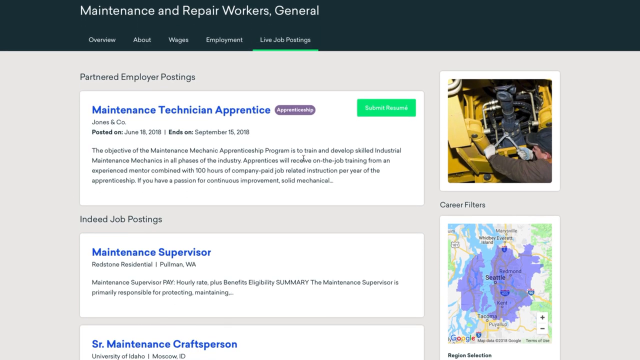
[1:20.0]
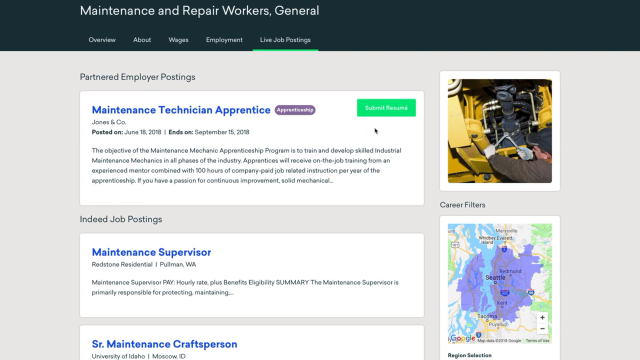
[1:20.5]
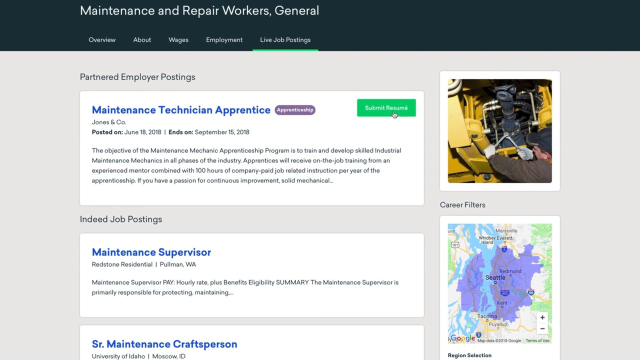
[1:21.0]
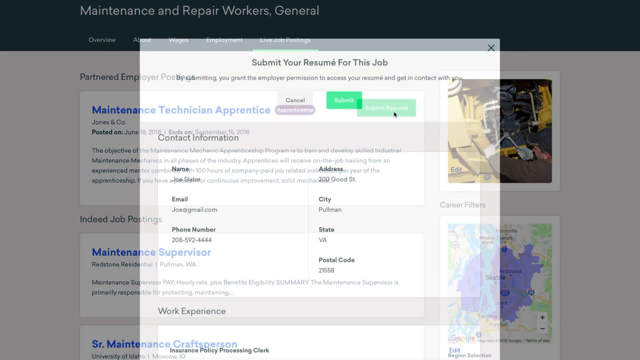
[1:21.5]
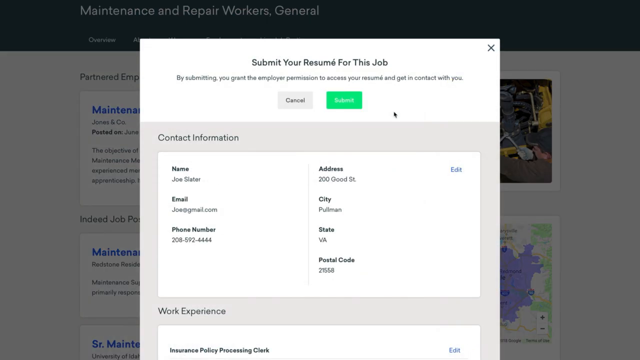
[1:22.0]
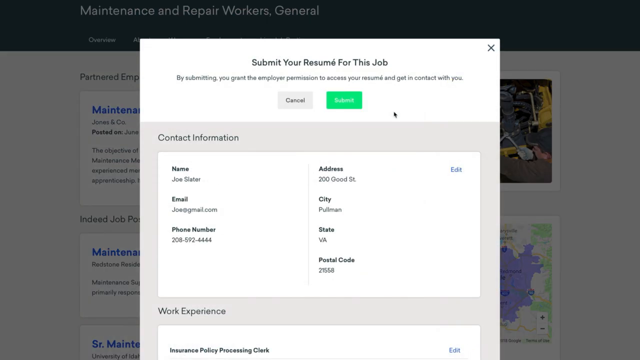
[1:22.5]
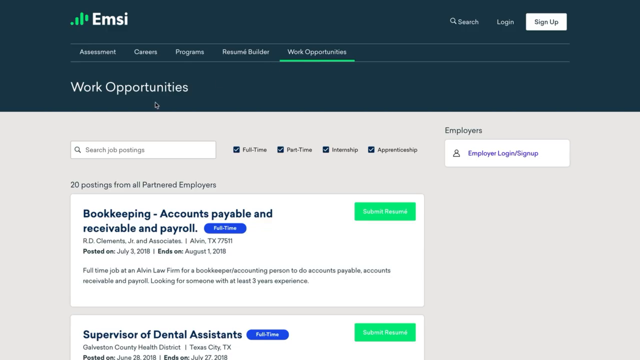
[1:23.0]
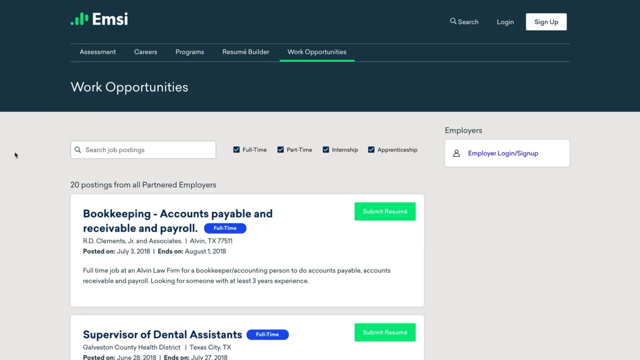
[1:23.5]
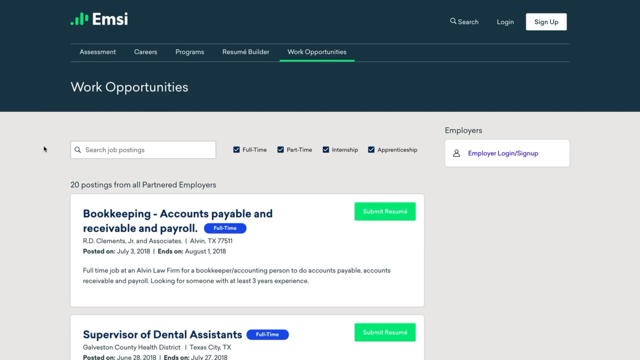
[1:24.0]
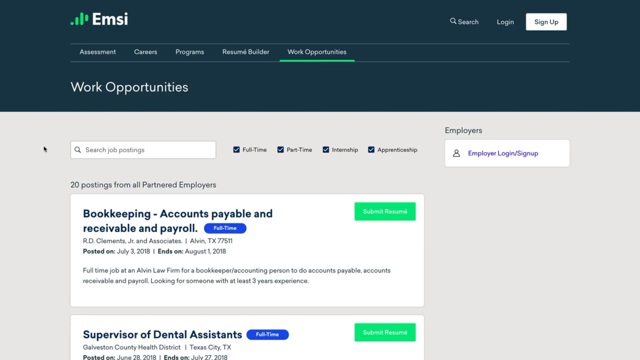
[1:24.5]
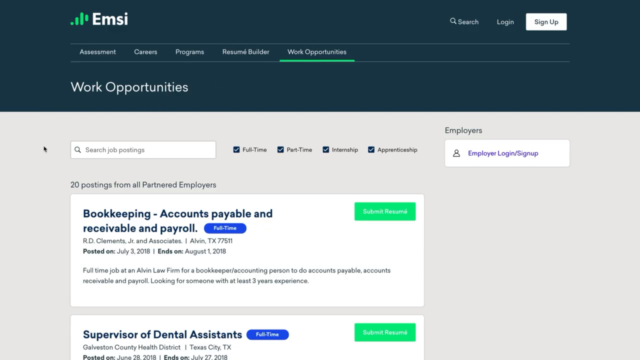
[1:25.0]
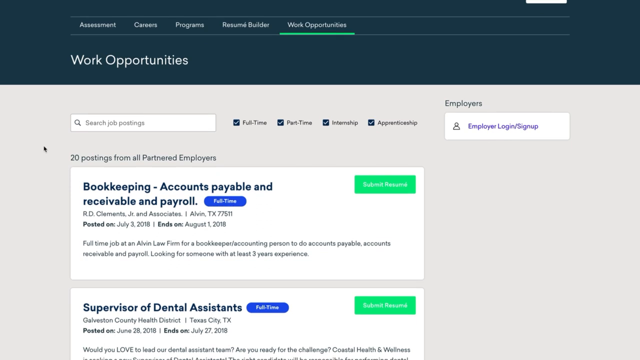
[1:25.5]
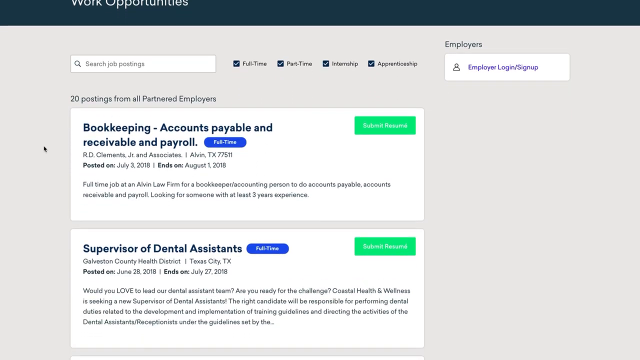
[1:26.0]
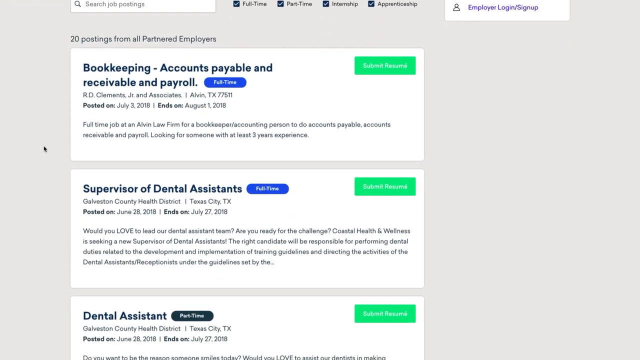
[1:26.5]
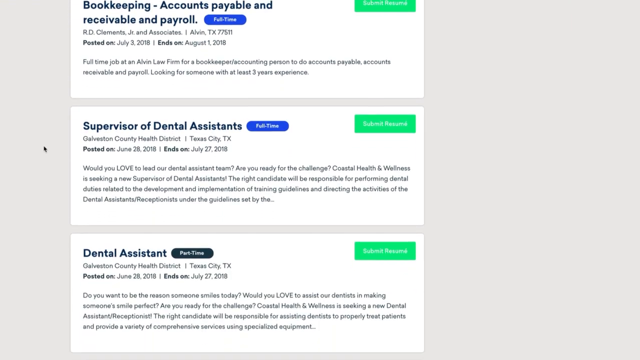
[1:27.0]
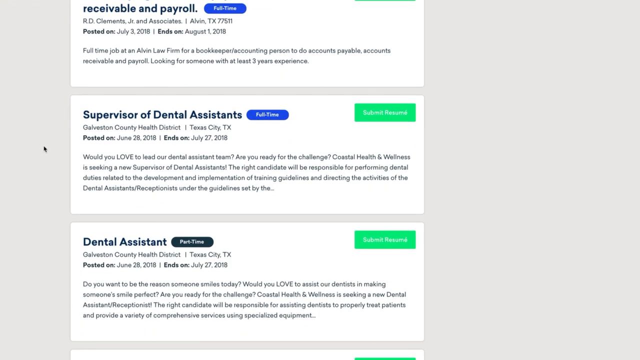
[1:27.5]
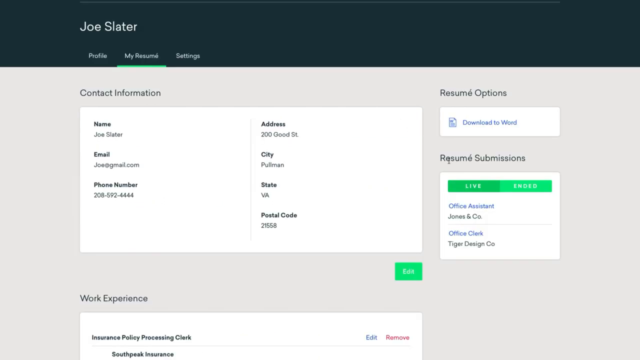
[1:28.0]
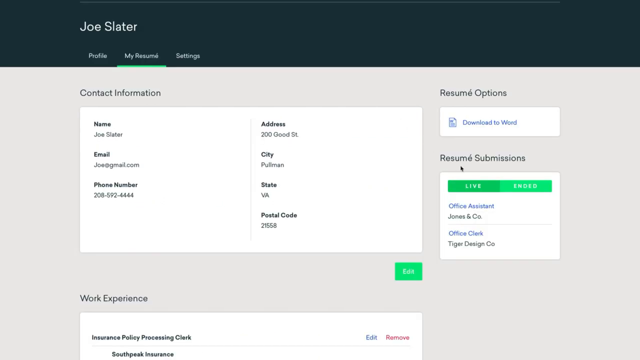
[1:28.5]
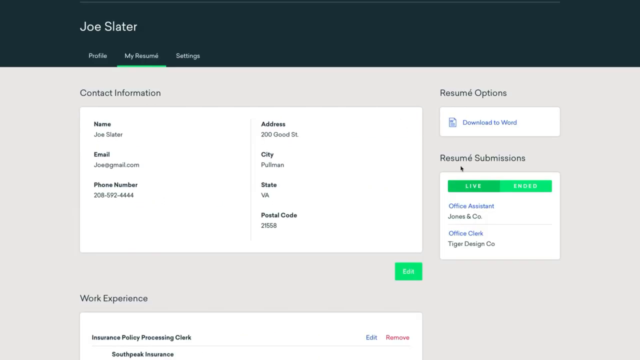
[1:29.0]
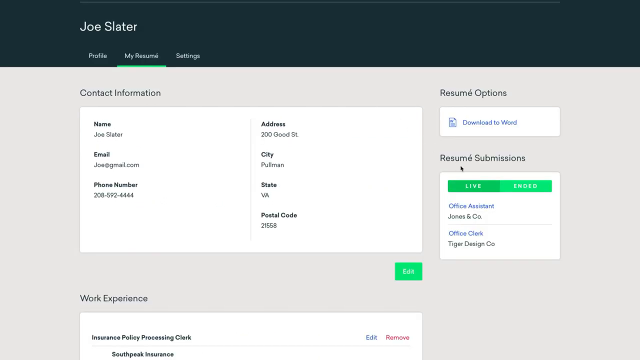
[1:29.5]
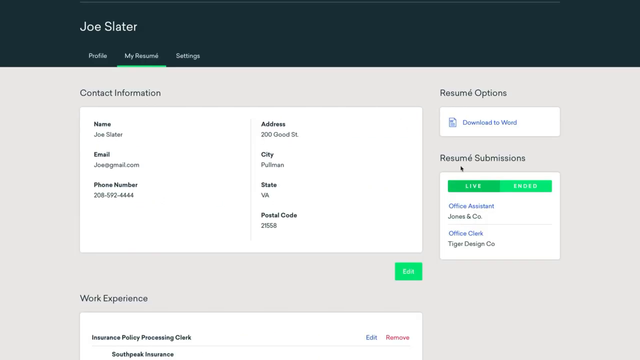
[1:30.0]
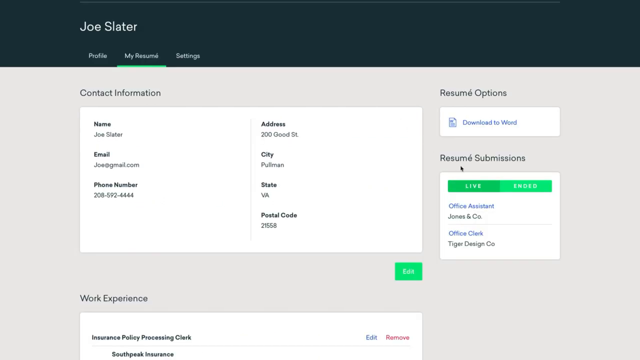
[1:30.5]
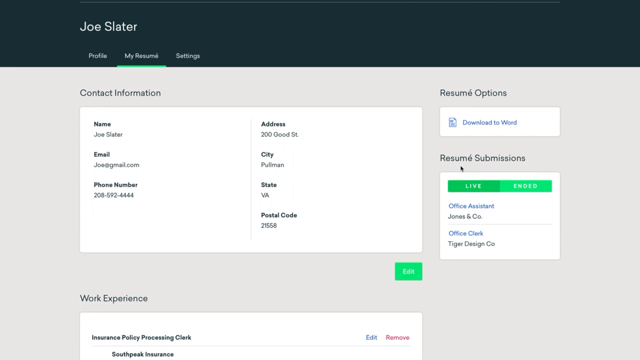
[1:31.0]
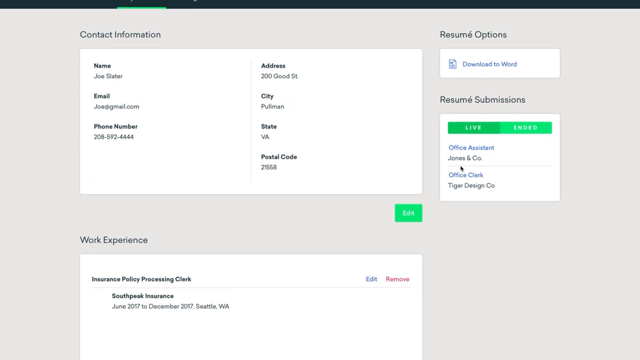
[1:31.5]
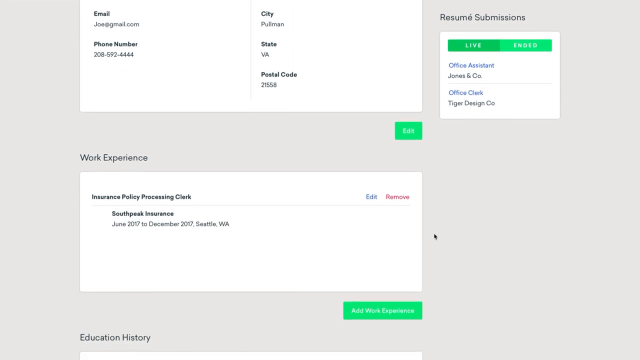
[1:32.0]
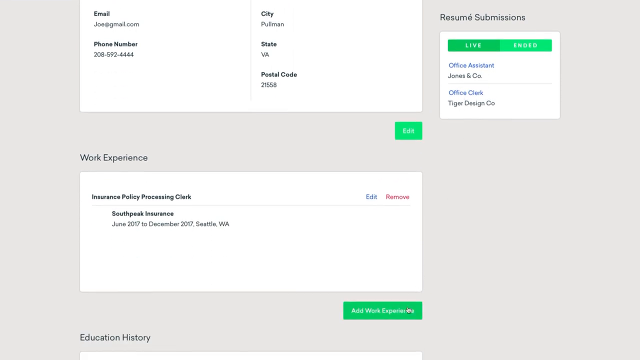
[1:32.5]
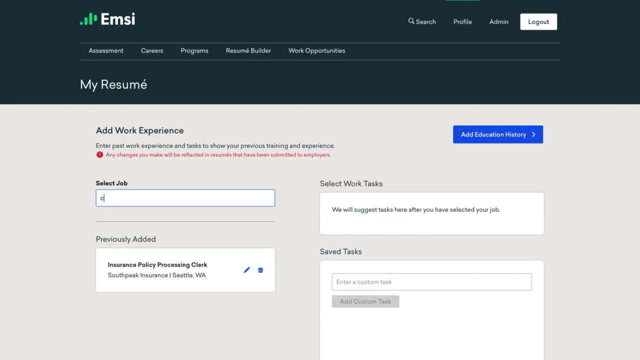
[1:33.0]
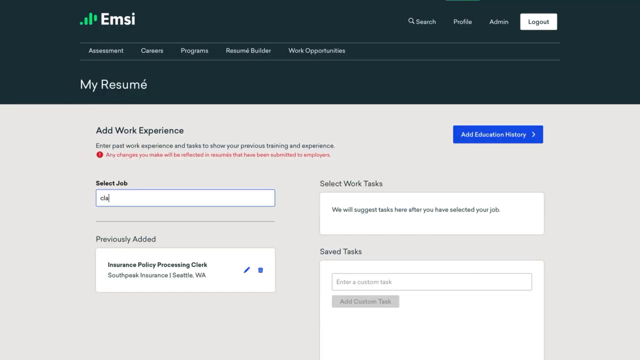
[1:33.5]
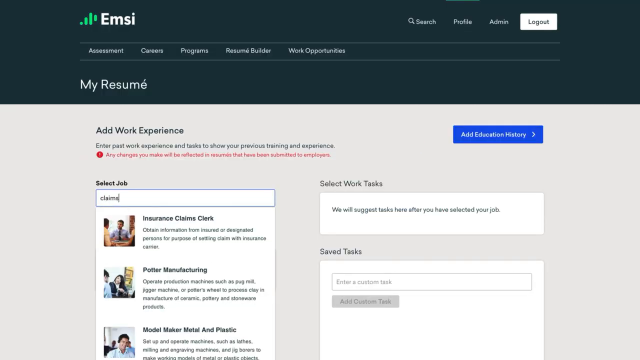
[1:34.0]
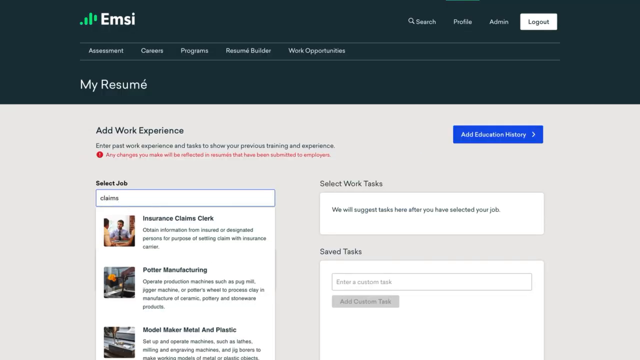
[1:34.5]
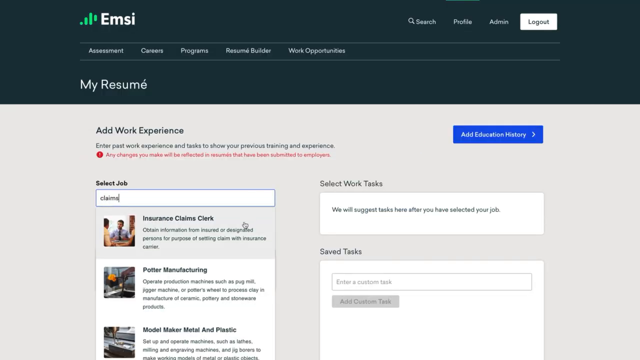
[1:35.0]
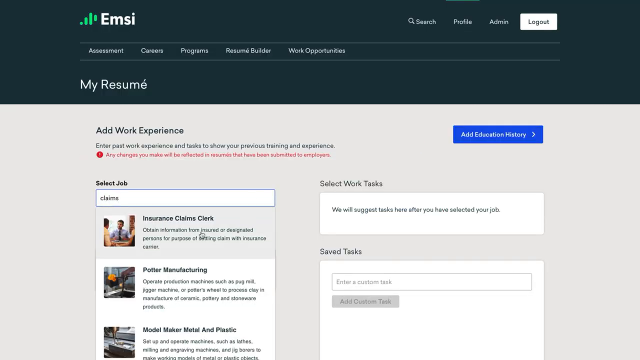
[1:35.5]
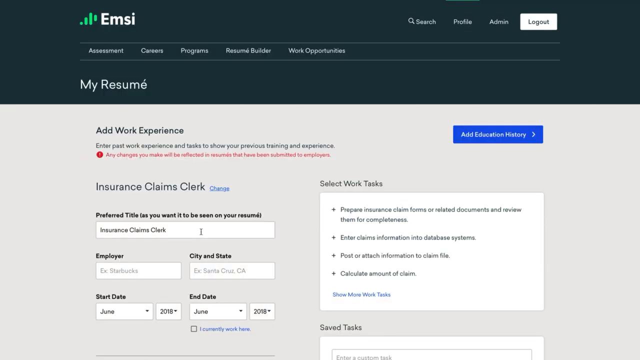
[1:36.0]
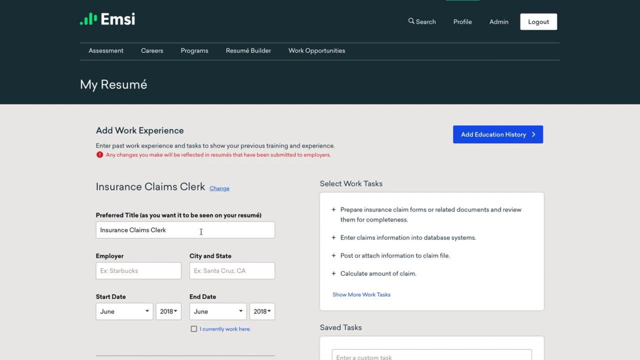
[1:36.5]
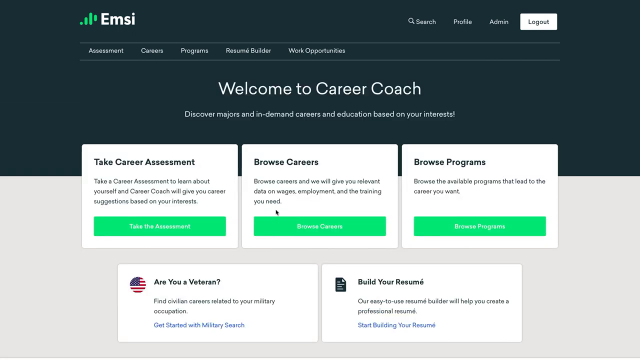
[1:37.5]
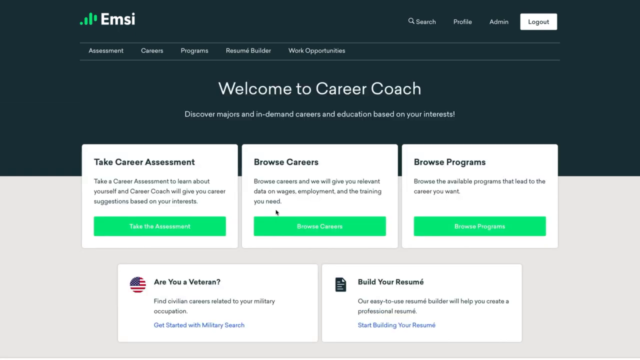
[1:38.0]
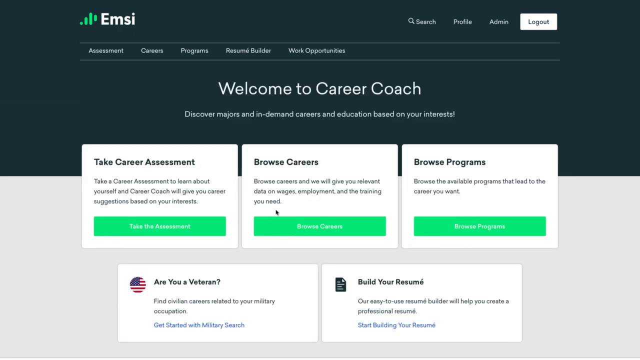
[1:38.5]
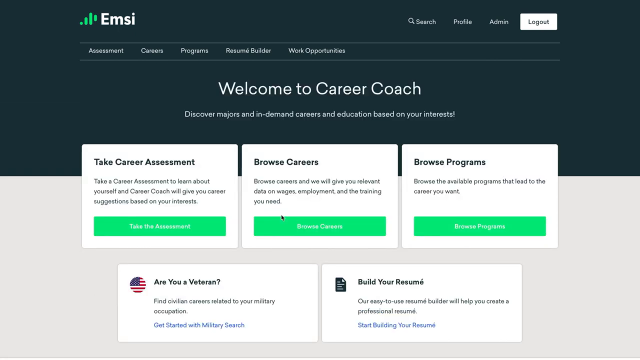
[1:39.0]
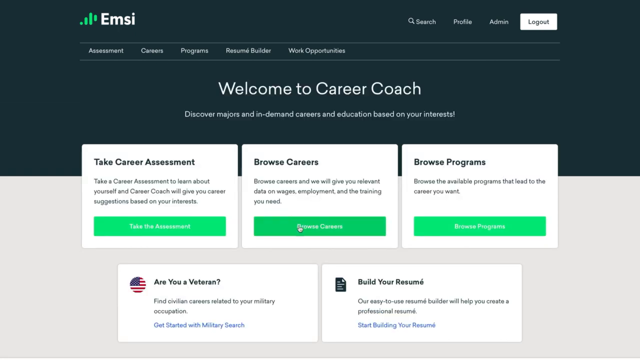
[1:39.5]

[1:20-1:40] On a job postings website, the user clicks "Submit Resume" next to a job posting for Maintenance Technician Apprentice, and a window appears saying "Submit your resume for this job." The video cuts to a page labeled "Work Opportunities," and the user scrolls down past several job postings. It then cuts to contact information for Joe Slater, including his resume submission. The user scrolls down and goes to a page titled "My Resume," which has the option to add work experience. The user types in a field titled "Select Job" and selects the job Insurance Claims Clerk. The video then cuts to a page titled "Welcome to your Career Coach," with the options Take Career Assessment, Browse Careers, and Browse Programs, each displayed as a gray rectangular button. Underneath are two more squares: one has a United States flag icon and asks the user if they are a veteran, and the other has an icon of a sheet of paper offering to help build your resume. The user clicks the second option, Browse Careers.